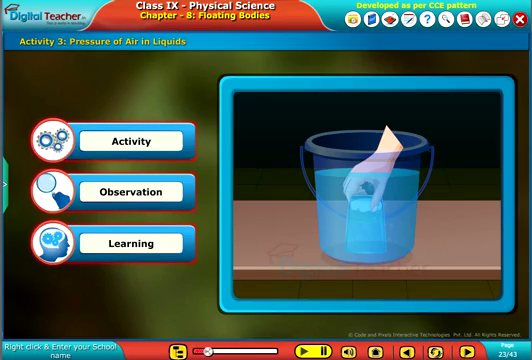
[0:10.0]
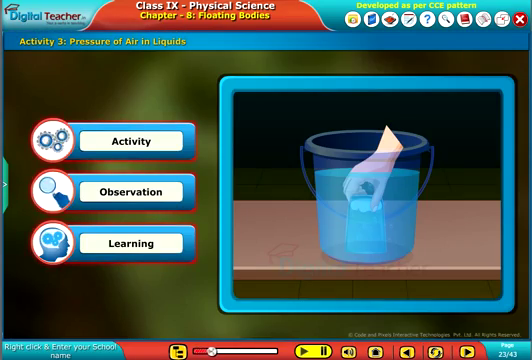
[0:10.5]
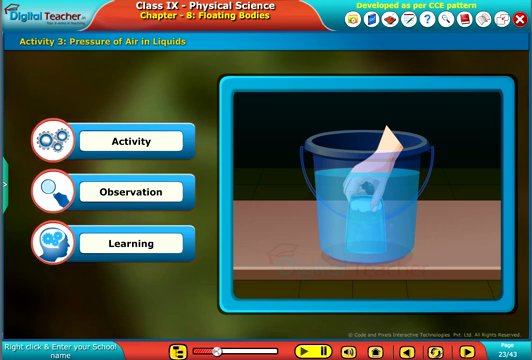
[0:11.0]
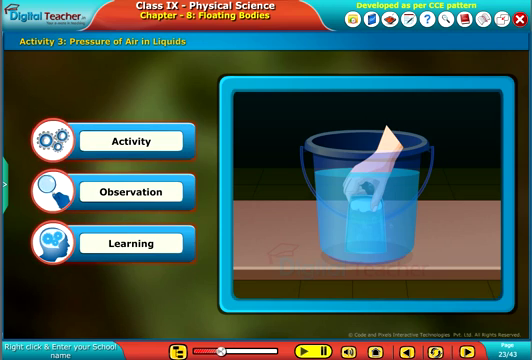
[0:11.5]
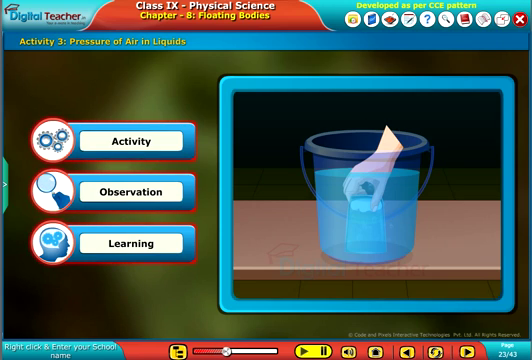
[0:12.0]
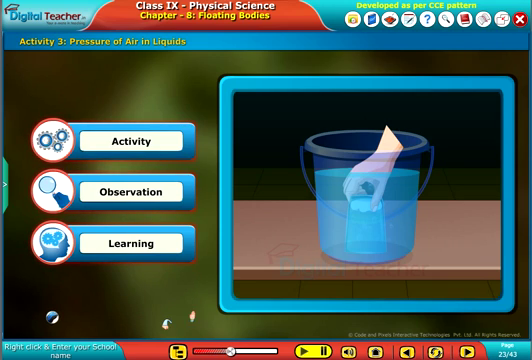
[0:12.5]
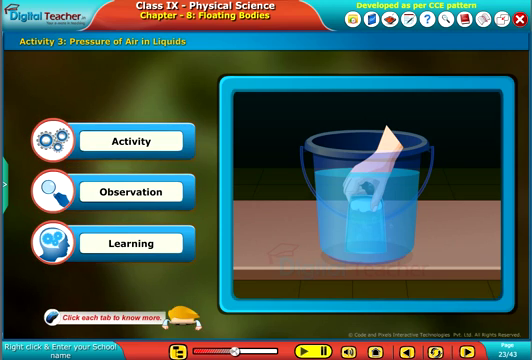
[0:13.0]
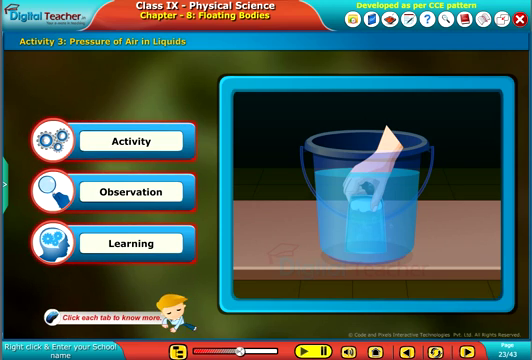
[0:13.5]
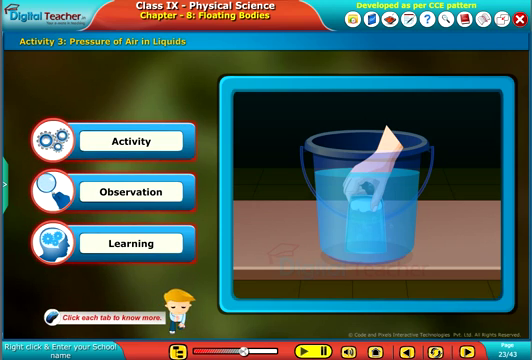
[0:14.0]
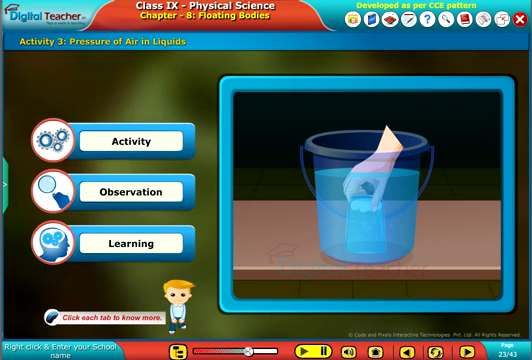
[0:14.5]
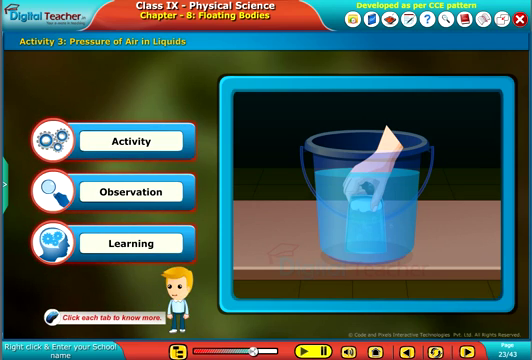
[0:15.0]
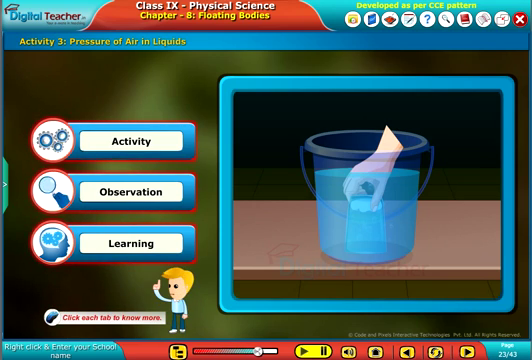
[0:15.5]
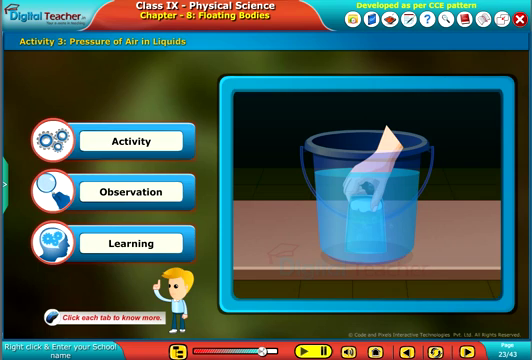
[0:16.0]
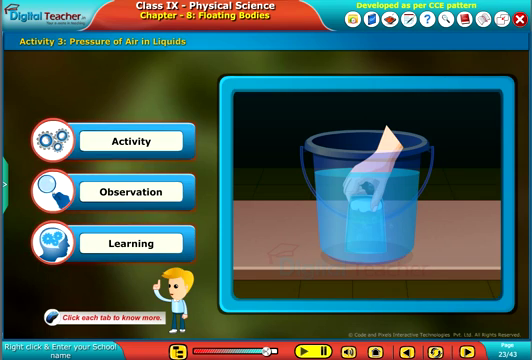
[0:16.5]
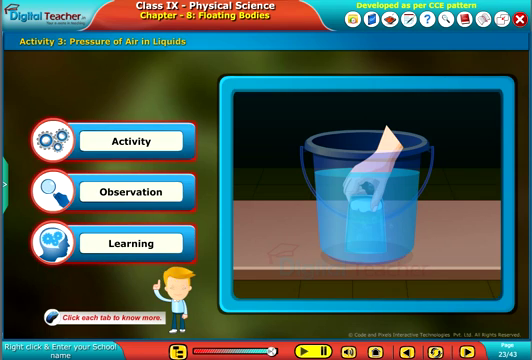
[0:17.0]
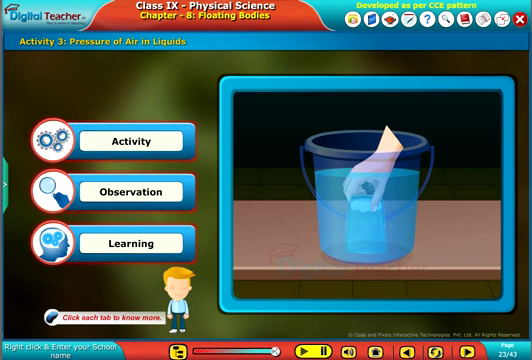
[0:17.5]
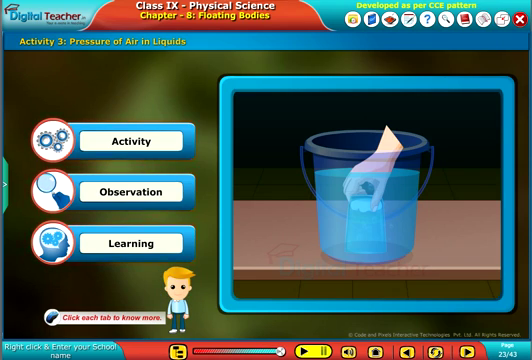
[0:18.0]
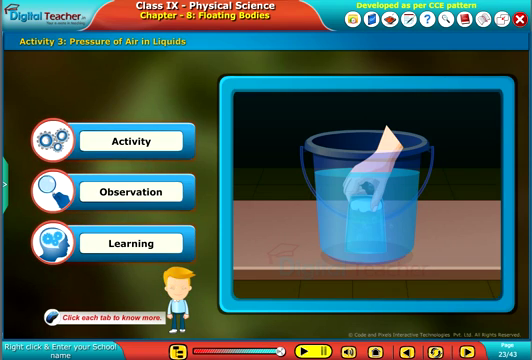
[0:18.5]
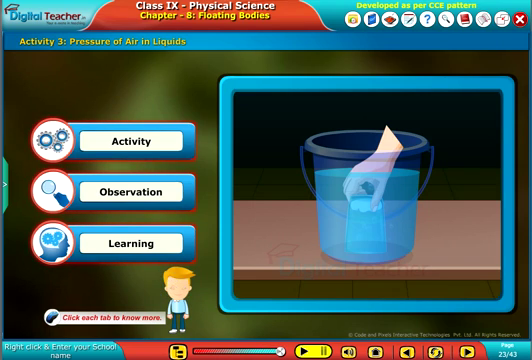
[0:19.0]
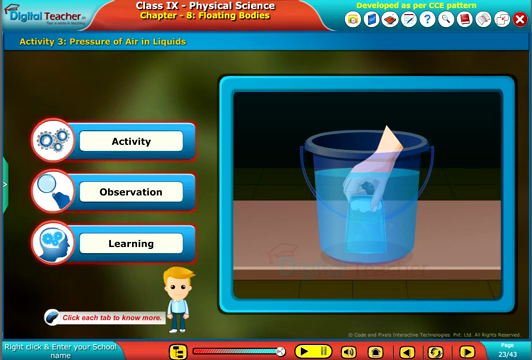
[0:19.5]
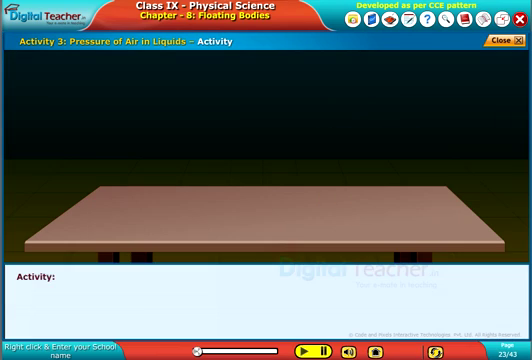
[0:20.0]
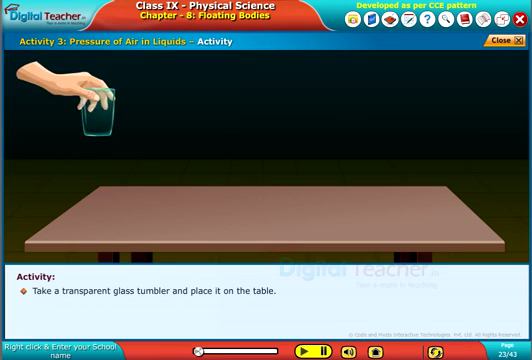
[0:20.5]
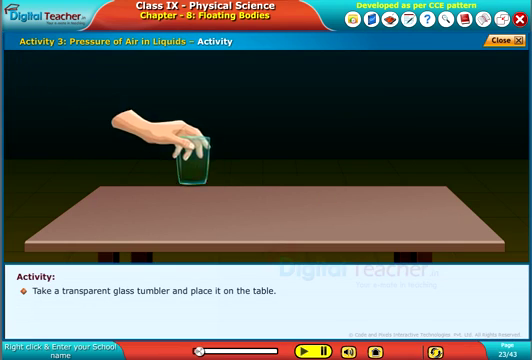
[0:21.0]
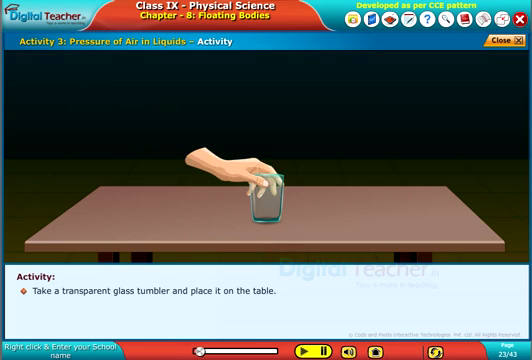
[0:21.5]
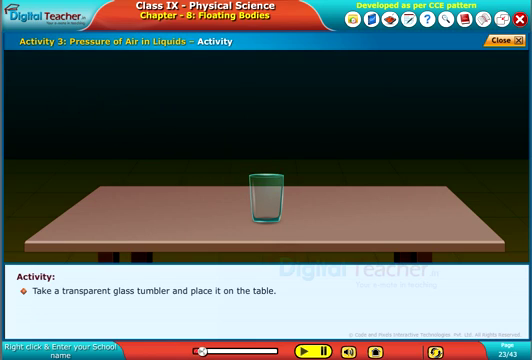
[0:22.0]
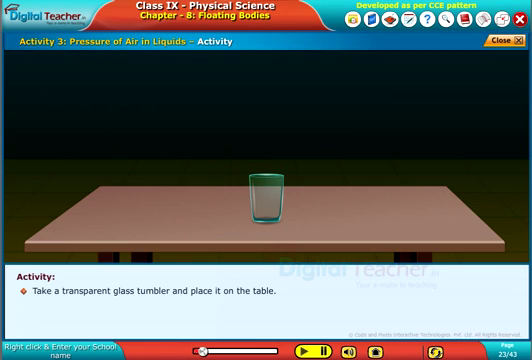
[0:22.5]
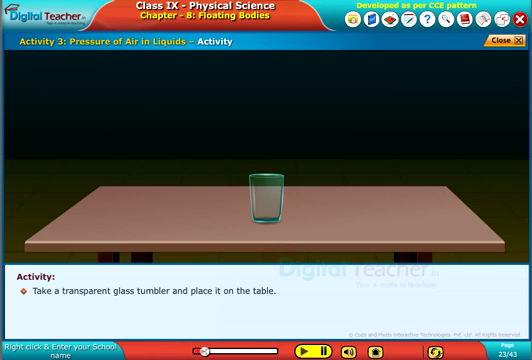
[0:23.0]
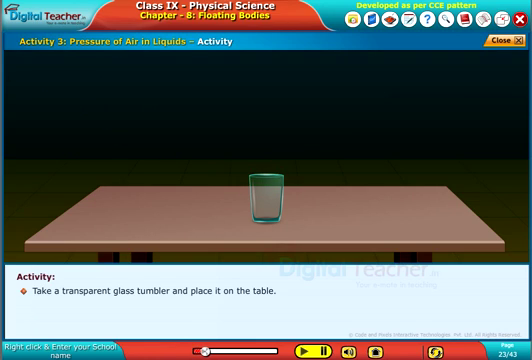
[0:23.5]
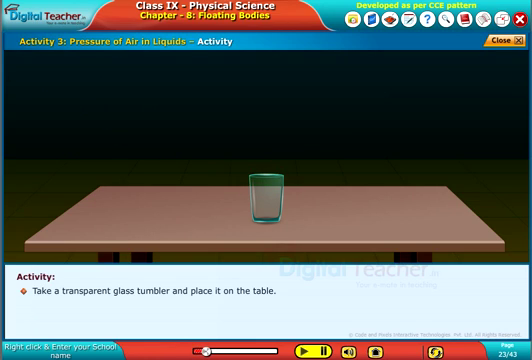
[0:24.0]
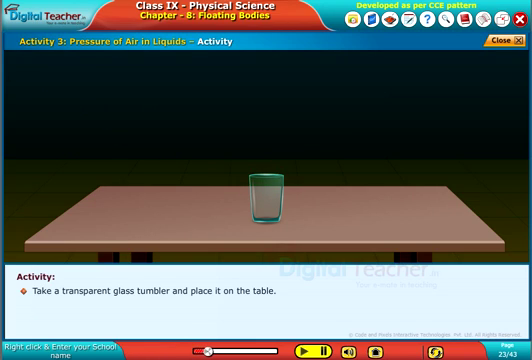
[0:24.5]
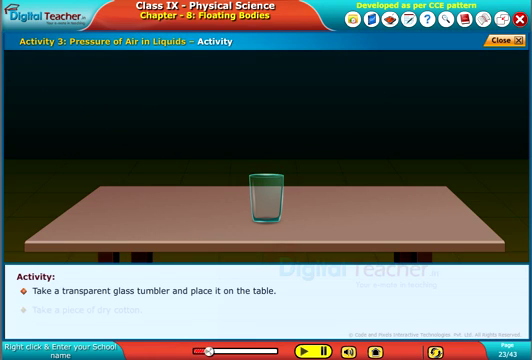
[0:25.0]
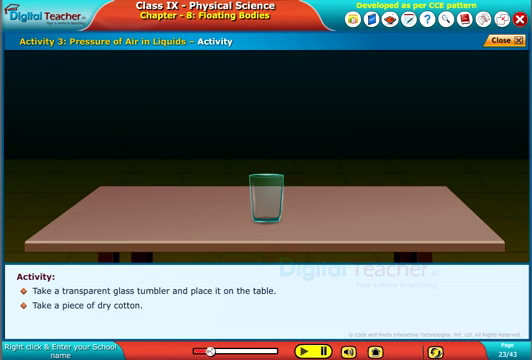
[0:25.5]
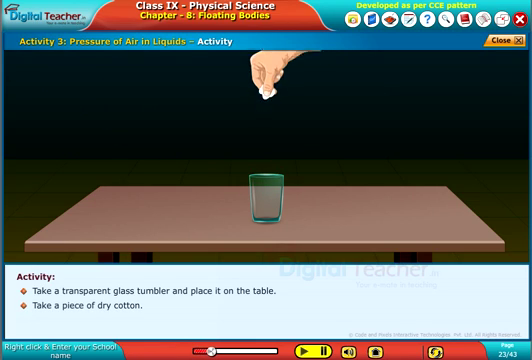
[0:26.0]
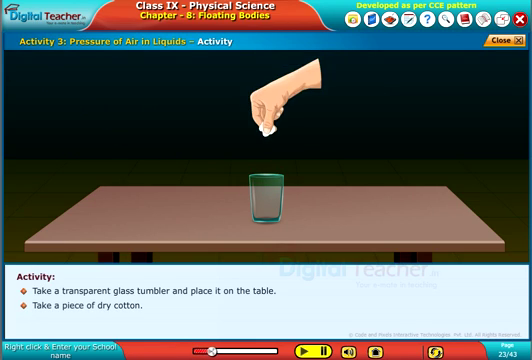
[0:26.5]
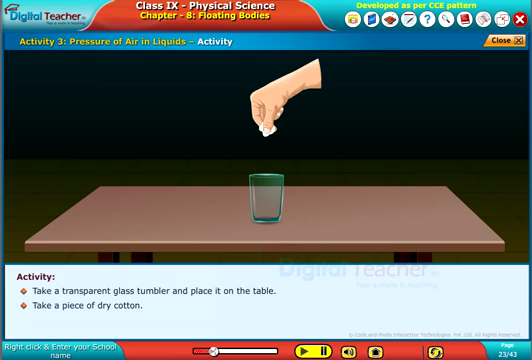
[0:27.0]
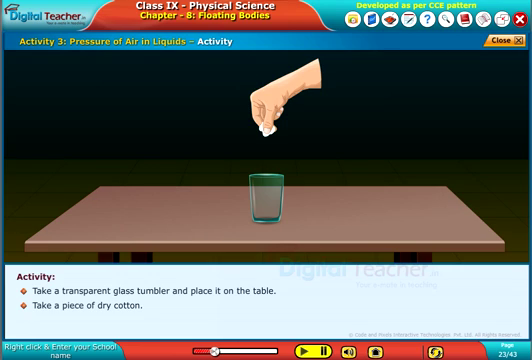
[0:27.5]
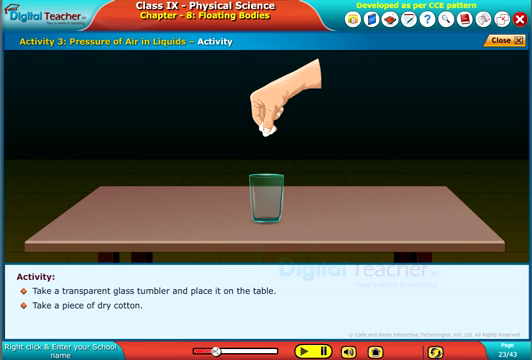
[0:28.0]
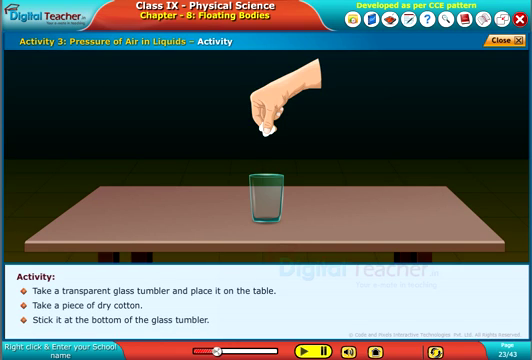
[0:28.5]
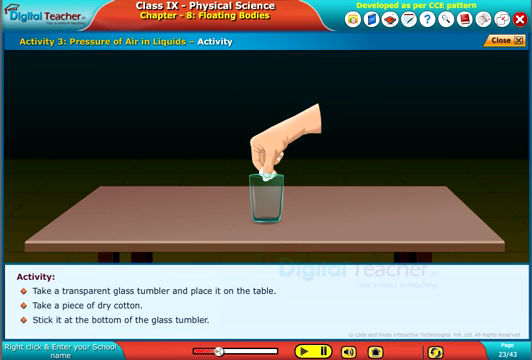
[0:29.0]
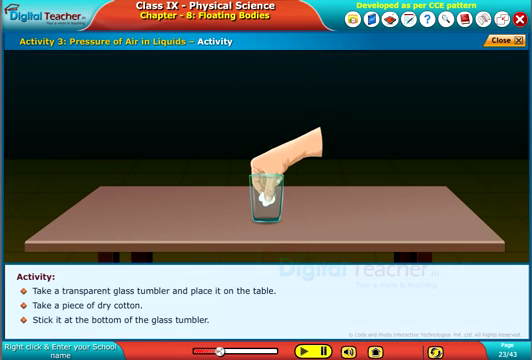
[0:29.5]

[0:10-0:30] The screen is on activity 3 of class 9 physical science, chapter 8, floating bodies. There are three options: activity, observation and learning. A child comes down onto the screen beside the prompt "click each tab to know more" and points a finger at the options. Activity is clicked, leading to a dark scene with a table. A flying hand puts an empty glass on the table. The activity instructions say to take a transparent glass tumbler and place it on the table, take a piece of dry cotton, and stick it at the bottom of the glass tumbler. The hand places the glass tumbler and puts the dry cotton into it.